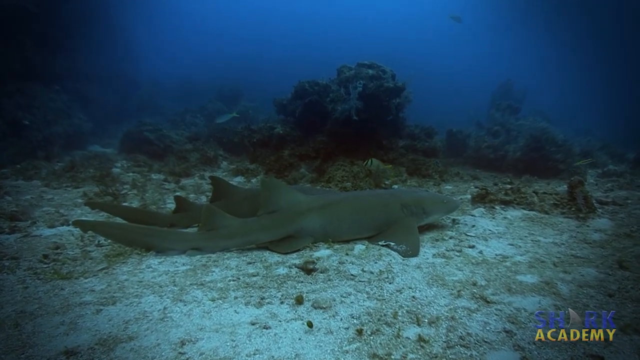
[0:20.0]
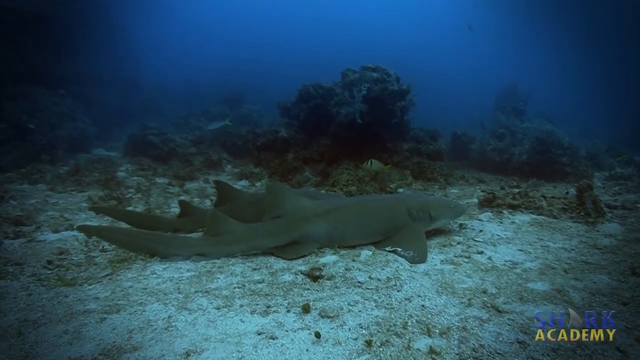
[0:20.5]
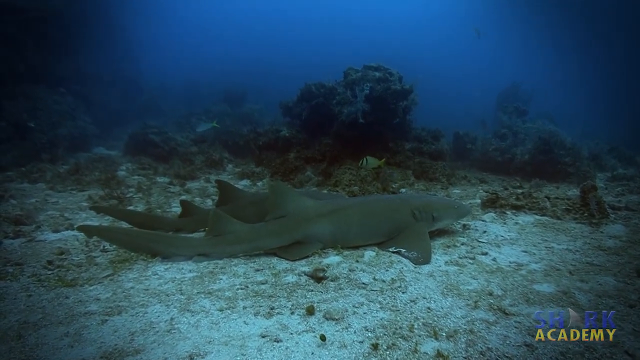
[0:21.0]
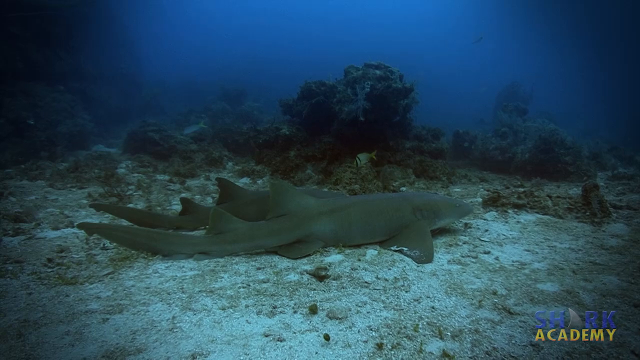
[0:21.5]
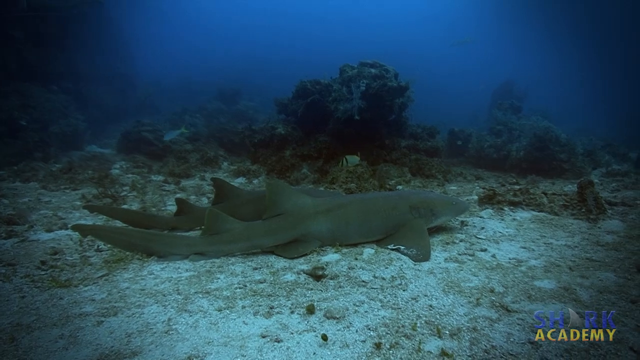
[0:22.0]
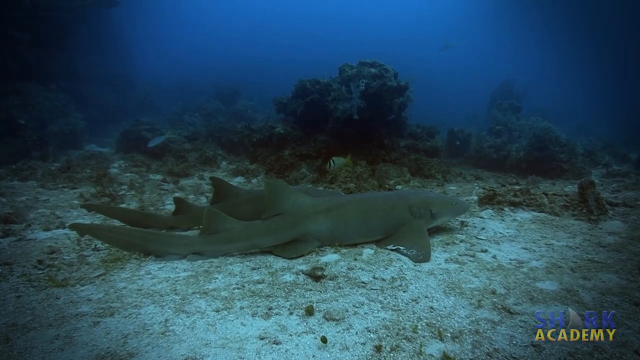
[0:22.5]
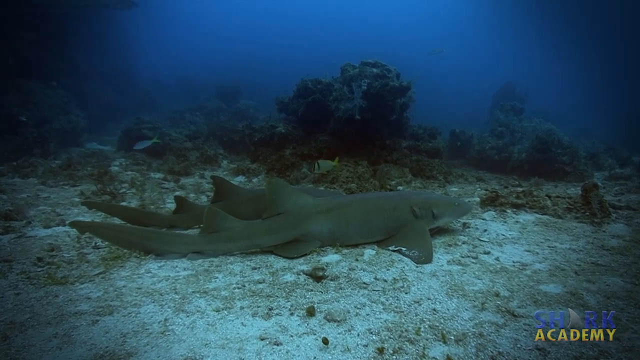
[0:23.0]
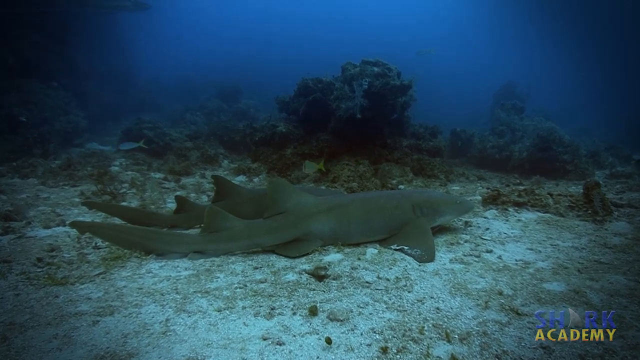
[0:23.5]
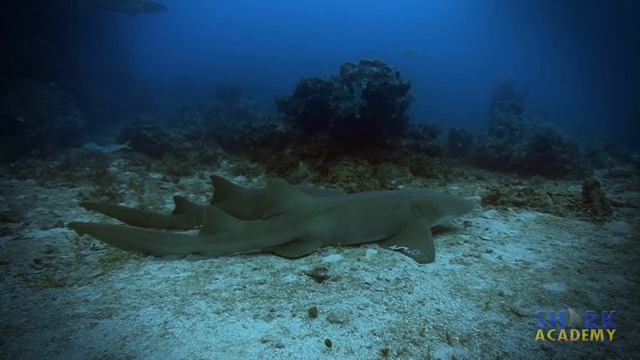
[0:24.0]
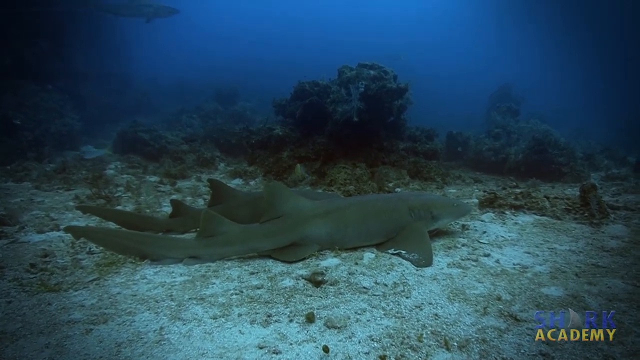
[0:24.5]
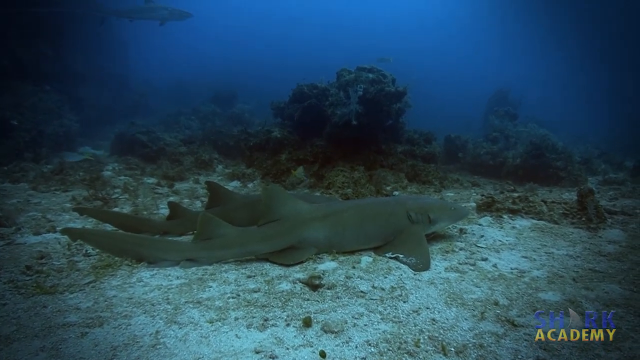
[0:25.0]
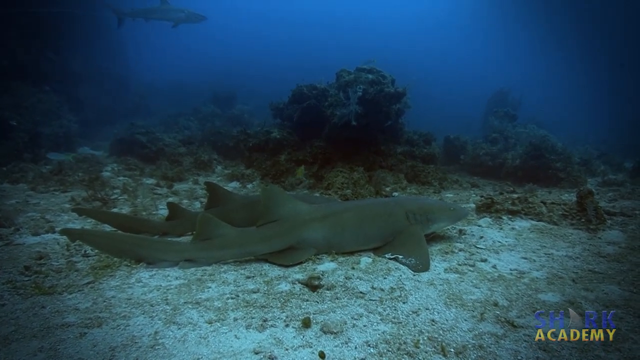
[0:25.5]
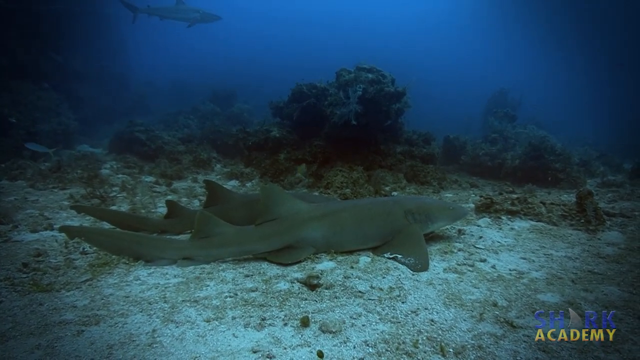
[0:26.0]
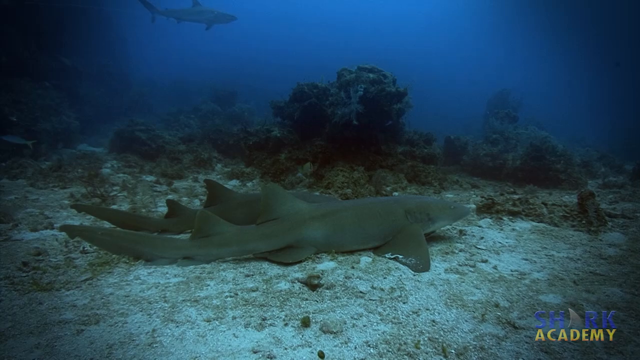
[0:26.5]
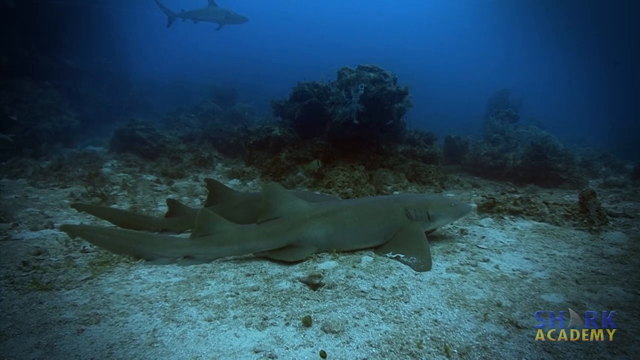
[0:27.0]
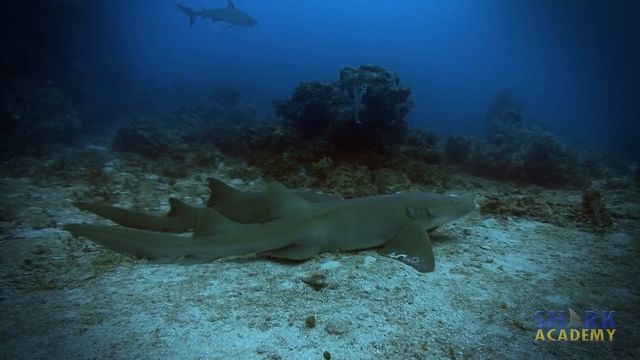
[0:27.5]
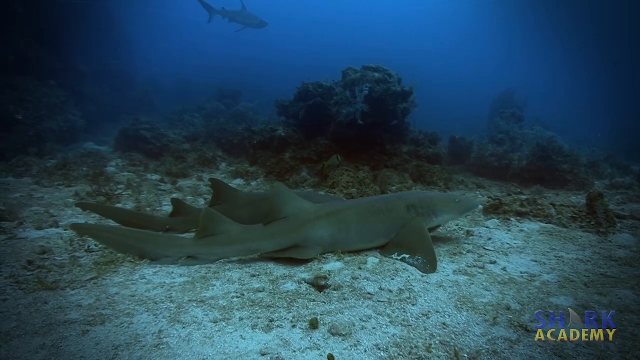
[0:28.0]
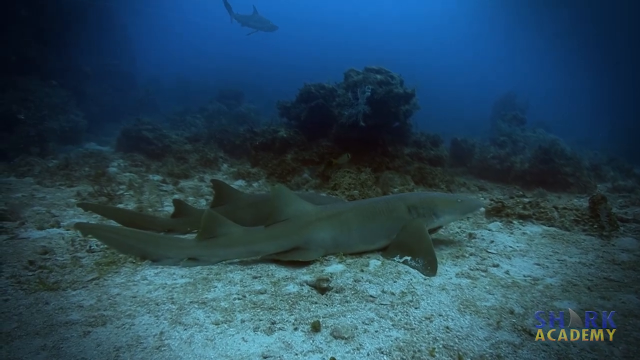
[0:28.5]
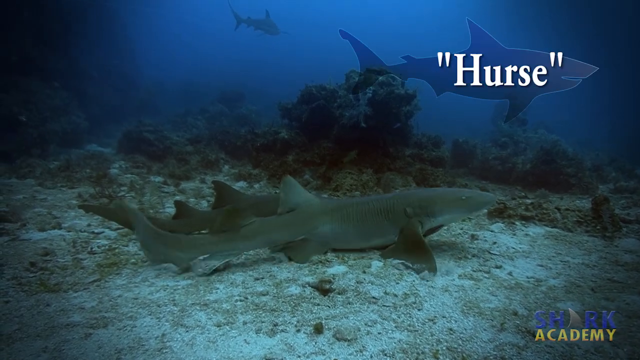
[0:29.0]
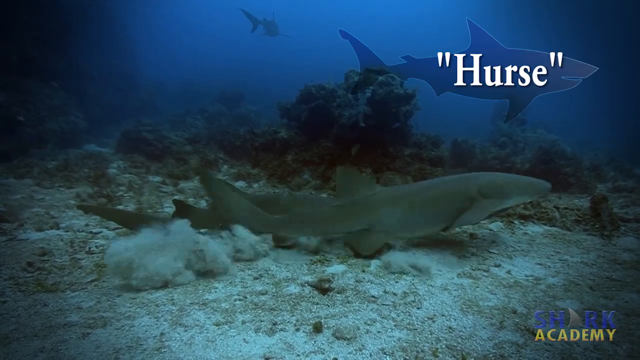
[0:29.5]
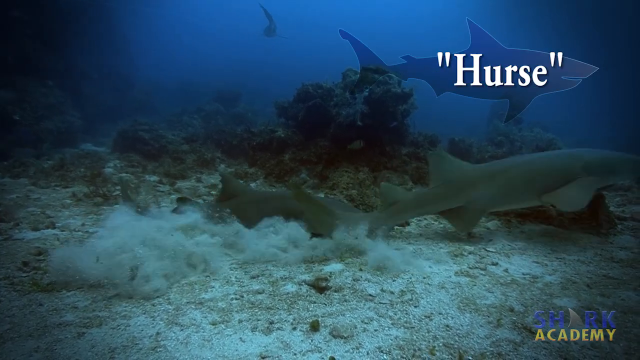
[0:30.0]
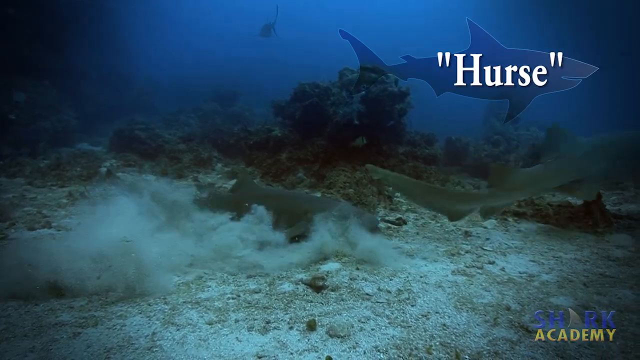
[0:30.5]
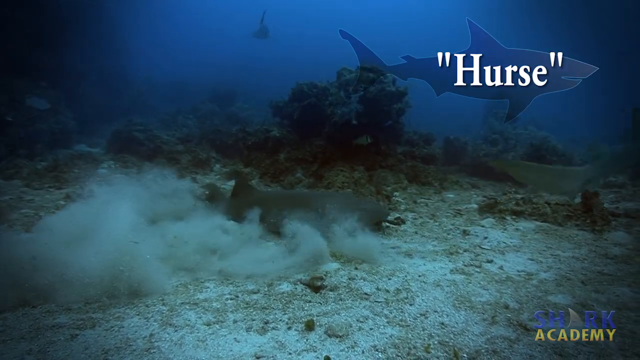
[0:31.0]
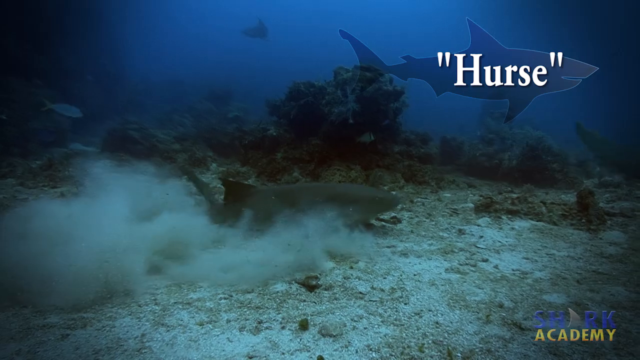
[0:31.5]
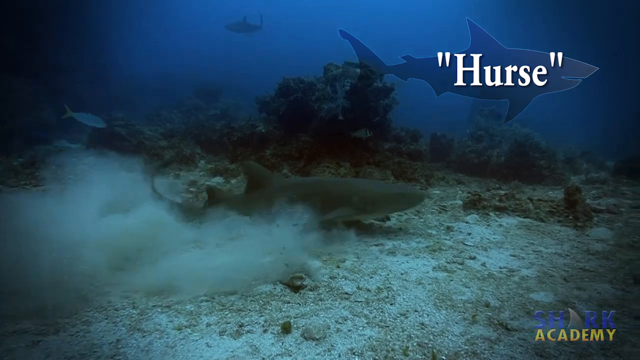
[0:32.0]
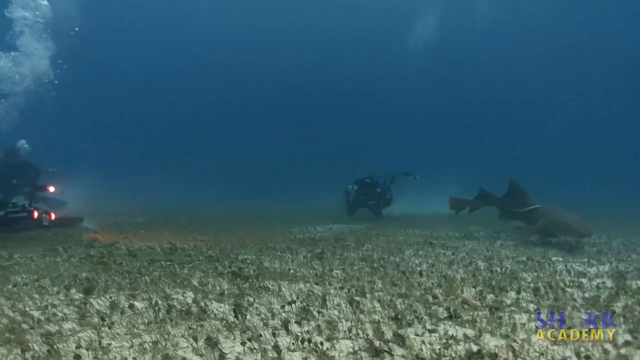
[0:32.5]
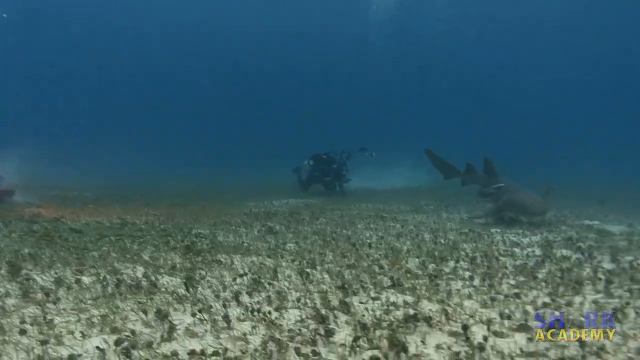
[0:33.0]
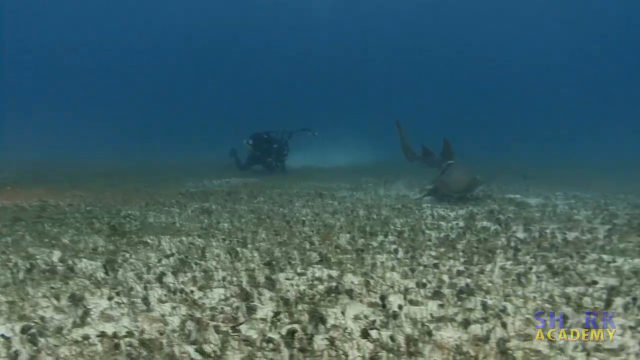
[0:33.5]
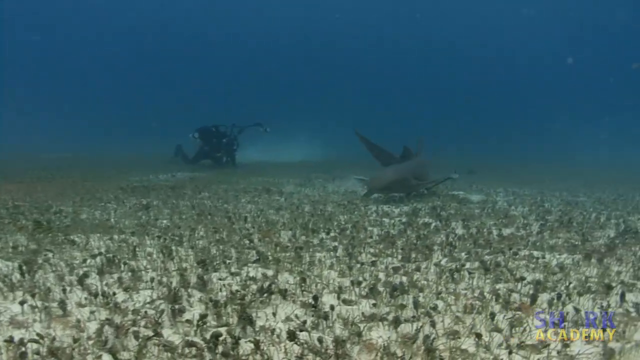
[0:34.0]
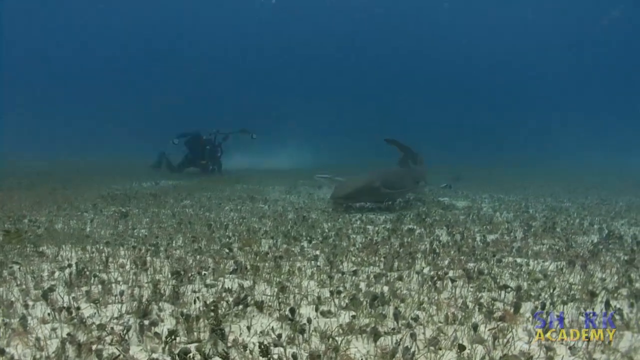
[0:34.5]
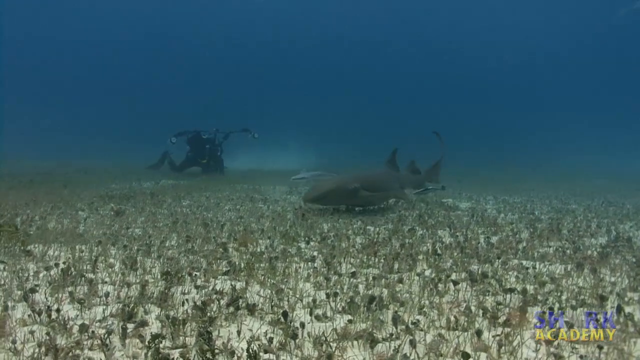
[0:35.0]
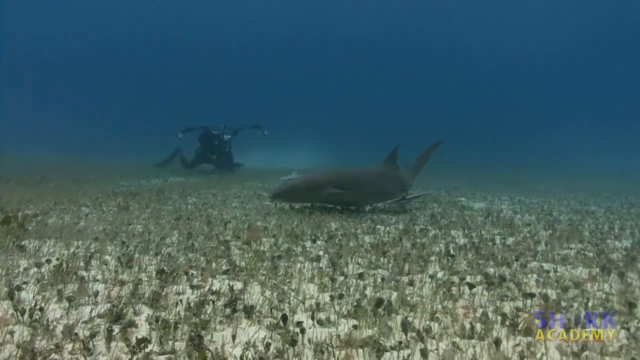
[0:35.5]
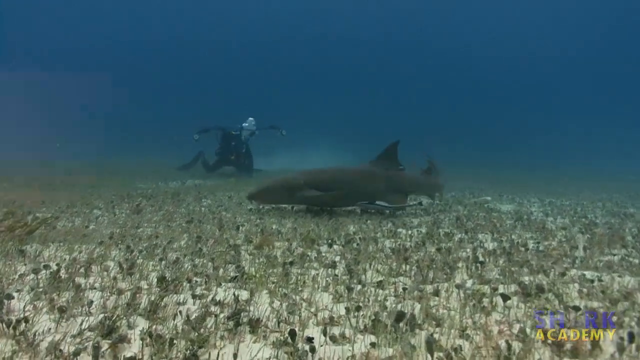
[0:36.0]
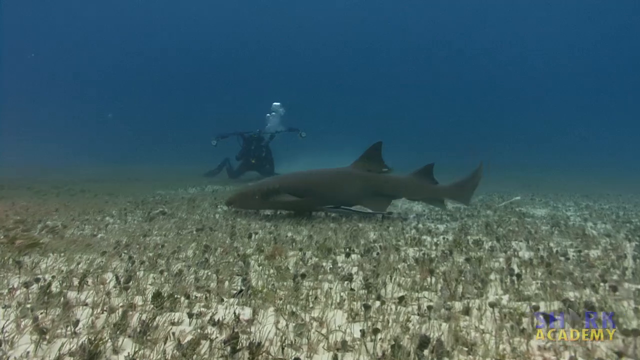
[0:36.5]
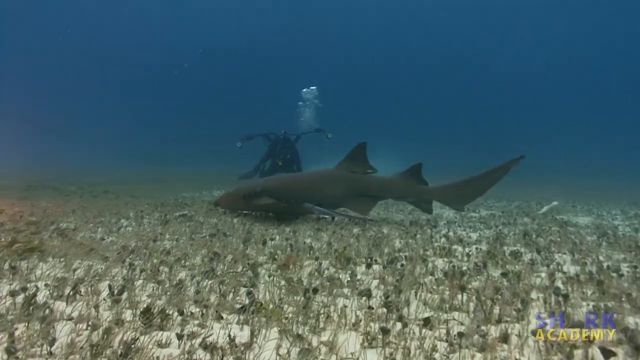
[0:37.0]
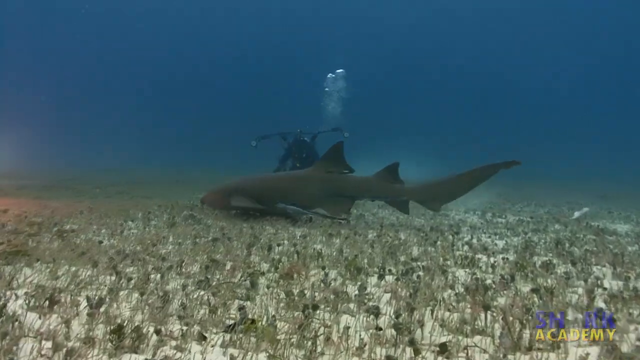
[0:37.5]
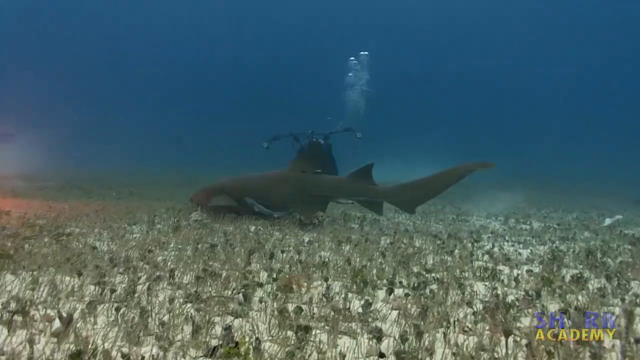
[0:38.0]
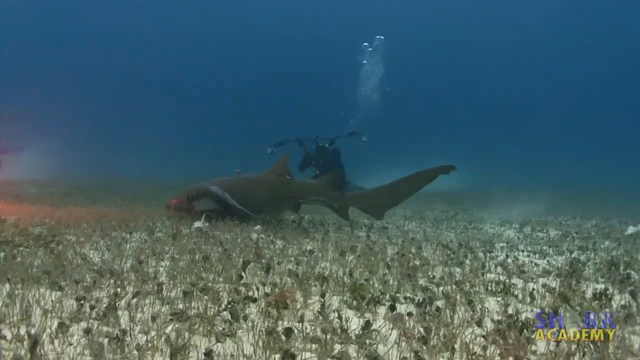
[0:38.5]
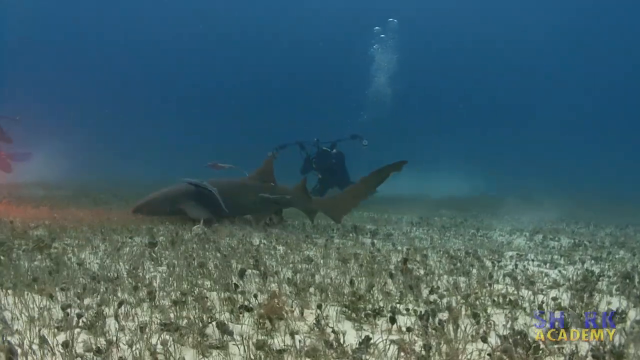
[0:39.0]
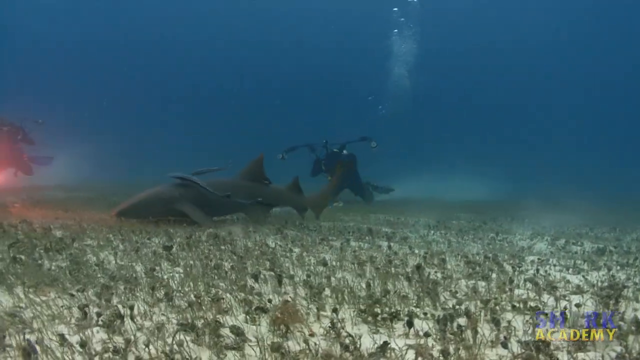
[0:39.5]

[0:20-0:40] Two sharks appear with their tails showing. Each has a big tail fin and two dorsal fins, one a little past halfway back and another just past it, with the first slightly bigger than the second. They are somewhat pointy-nosed. At the beginning another shark swims in the background. The front shark takes off, and the word "Hurse" appears in quotes at the top right of the video. After the shark leaves, the camera pans to another shot of a shark swimming very close to the bottom of the sea. Someone is filming it from right beyond it, with lights visible, and other people film off to the left, apparently from all around.